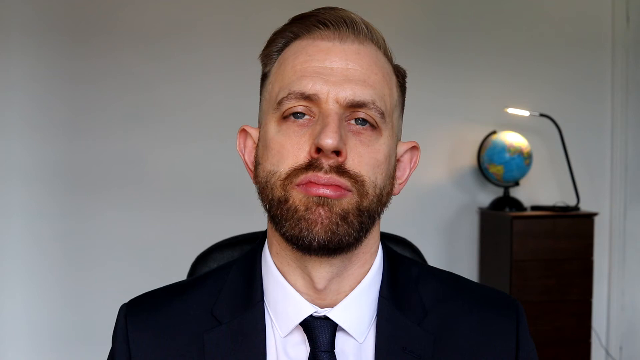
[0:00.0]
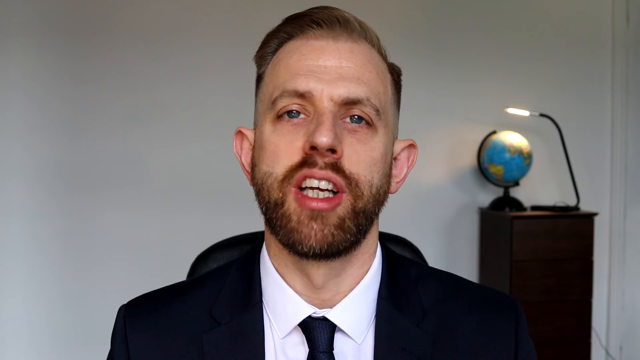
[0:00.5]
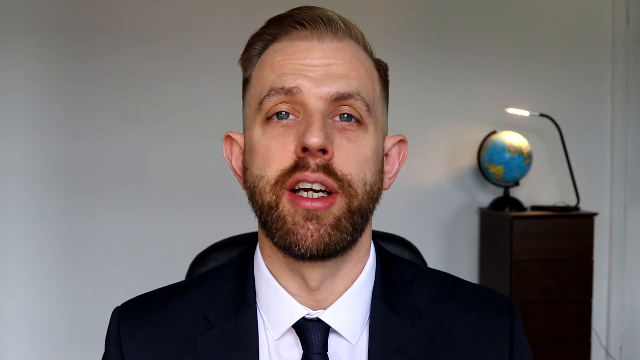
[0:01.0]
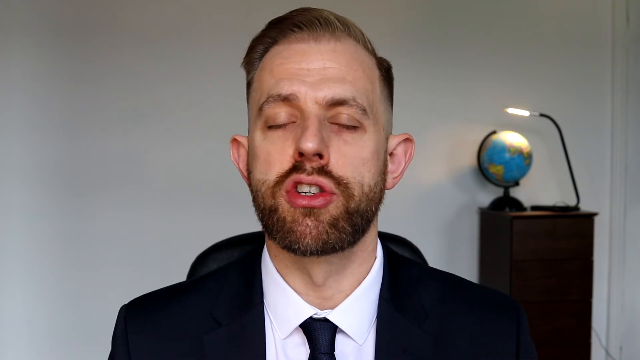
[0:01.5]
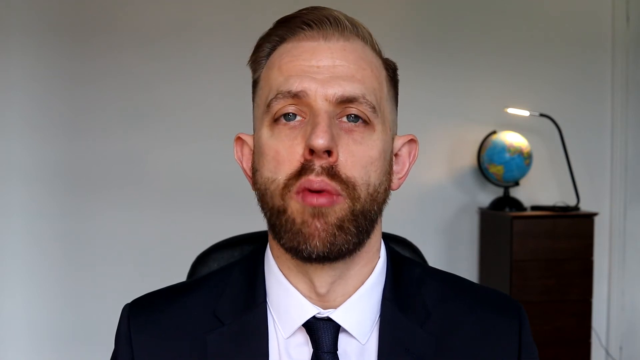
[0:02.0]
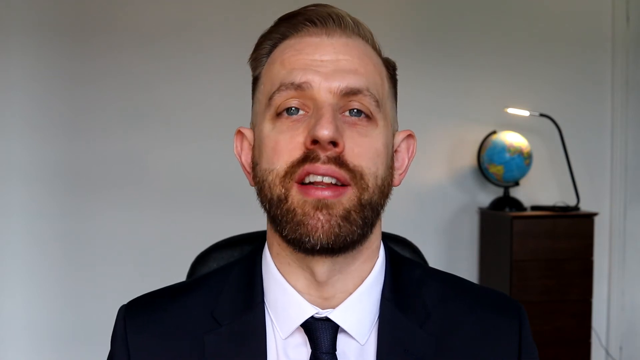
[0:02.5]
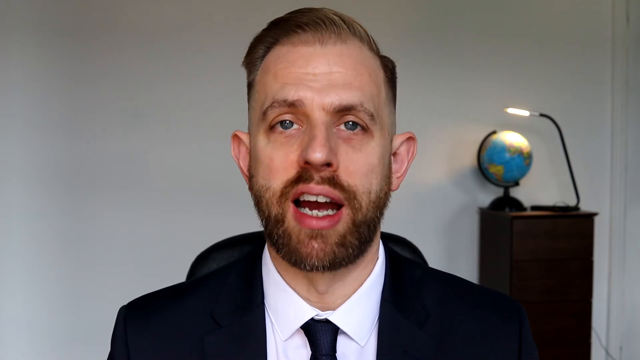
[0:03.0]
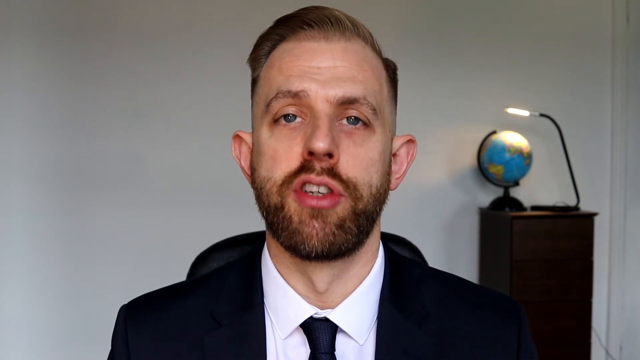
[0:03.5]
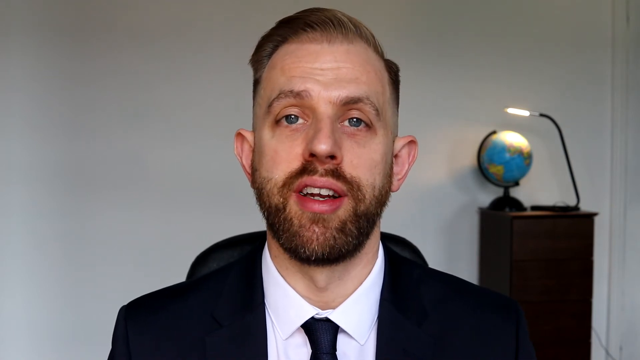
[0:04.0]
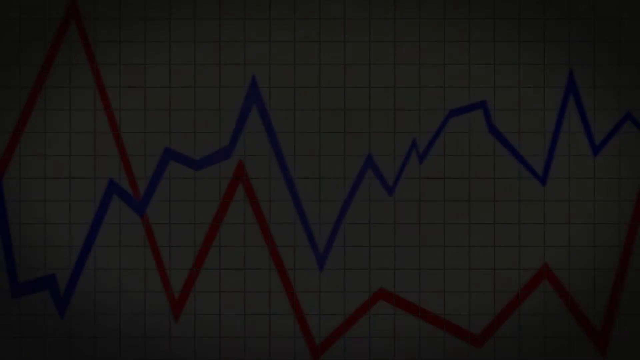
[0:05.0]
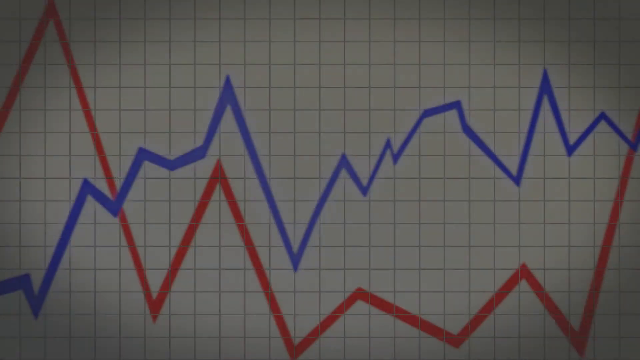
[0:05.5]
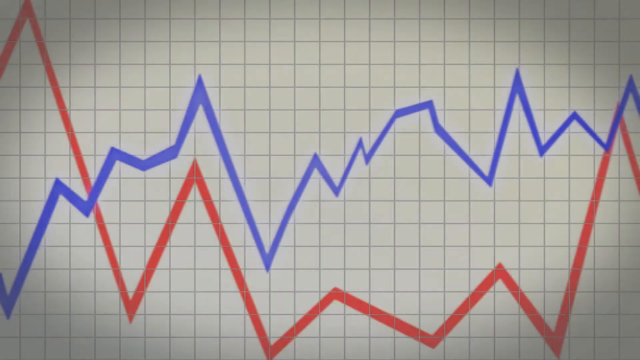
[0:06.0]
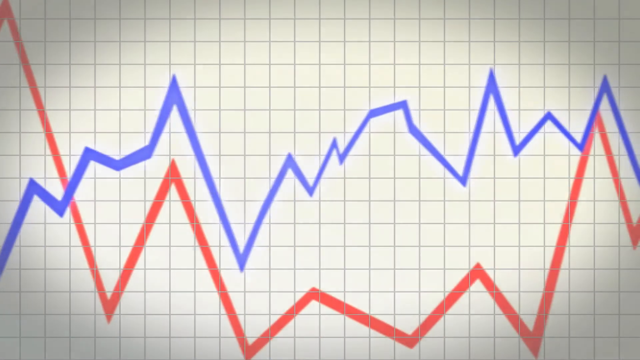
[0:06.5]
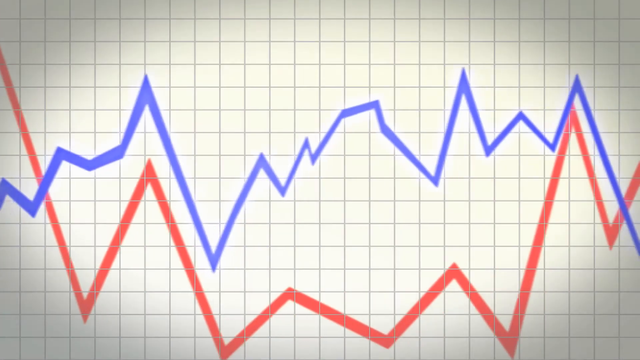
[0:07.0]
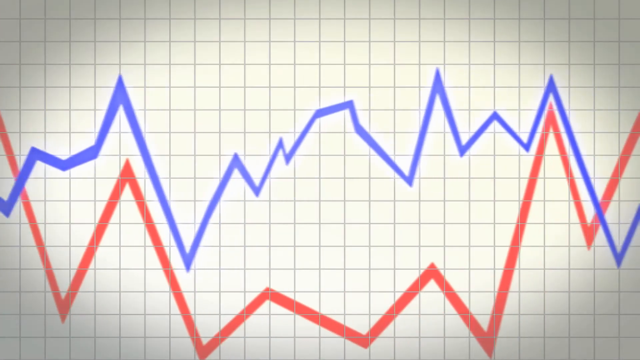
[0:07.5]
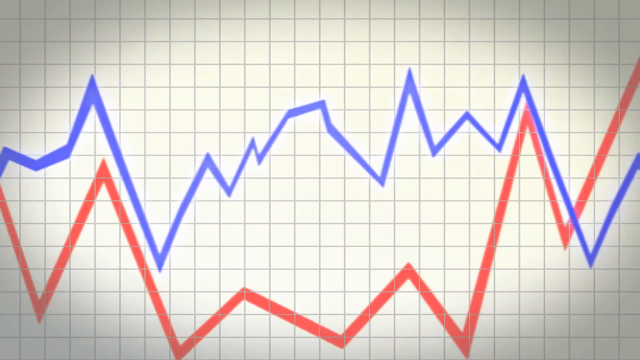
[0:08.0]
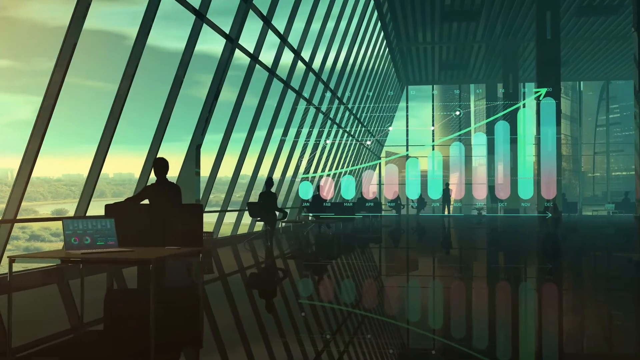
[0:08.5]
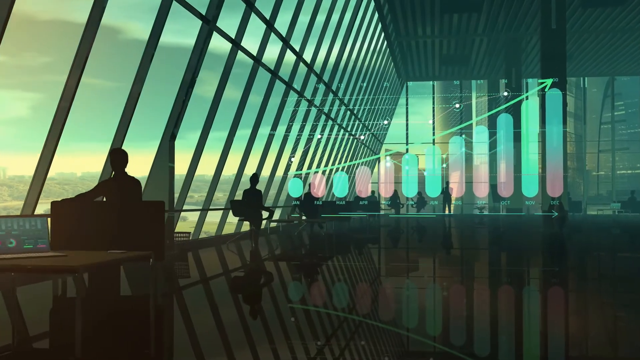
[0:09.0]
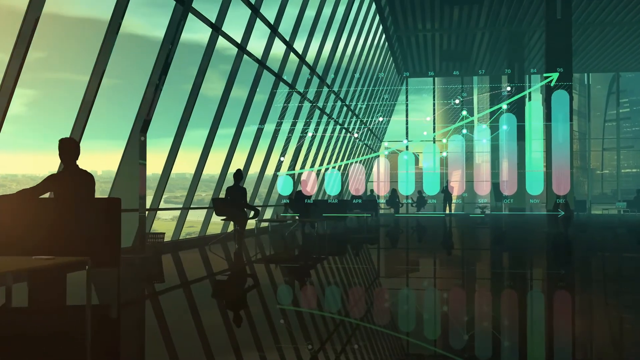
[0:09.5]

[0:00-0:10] A graph shows the UK economy rising along a yellow line. An orange line represents a type of industry that was high but later keeps dropping. A blue line shows another type of industry that is not rising.